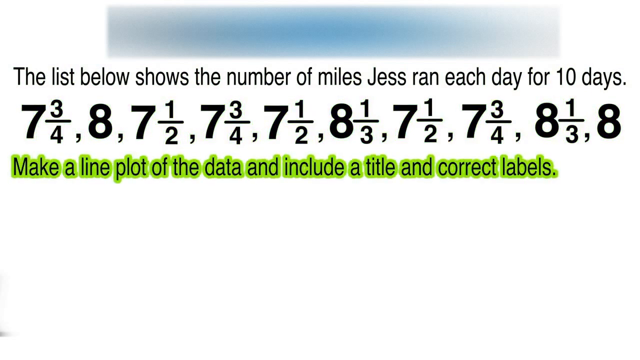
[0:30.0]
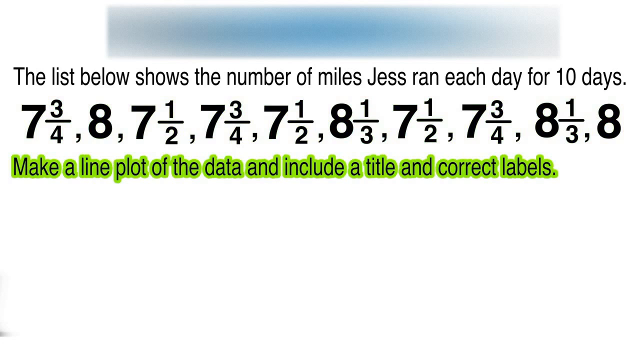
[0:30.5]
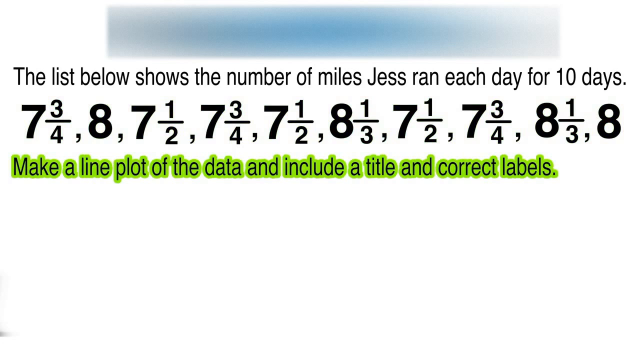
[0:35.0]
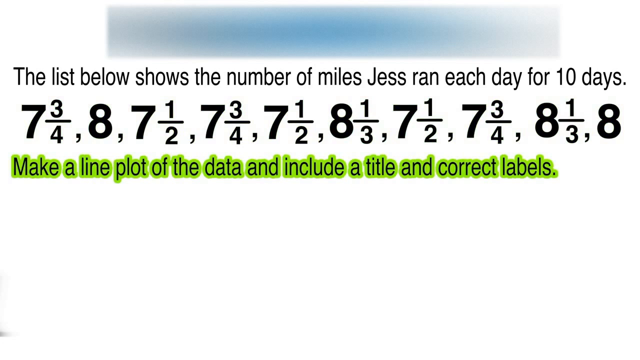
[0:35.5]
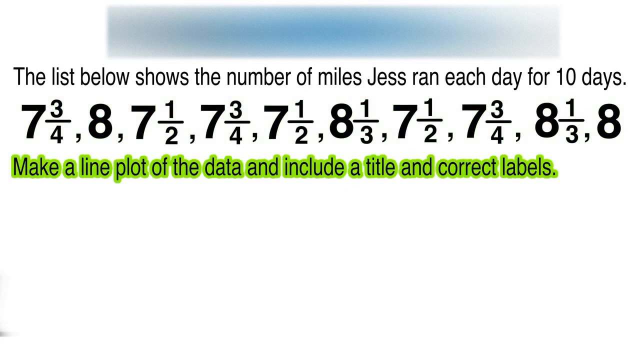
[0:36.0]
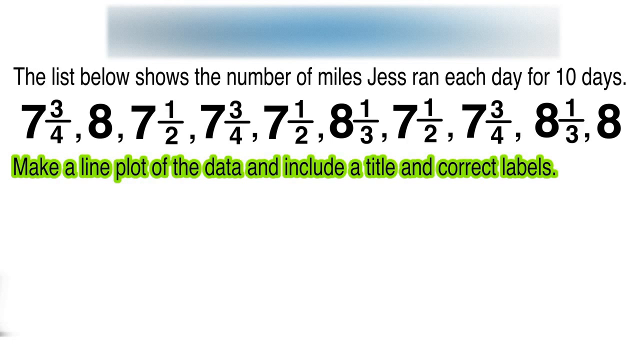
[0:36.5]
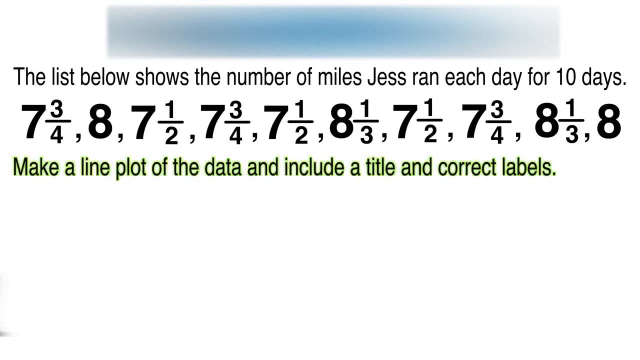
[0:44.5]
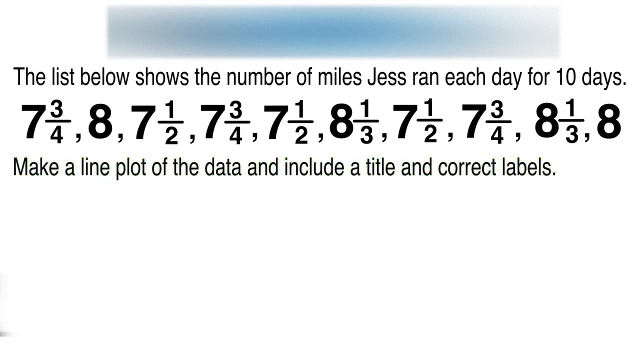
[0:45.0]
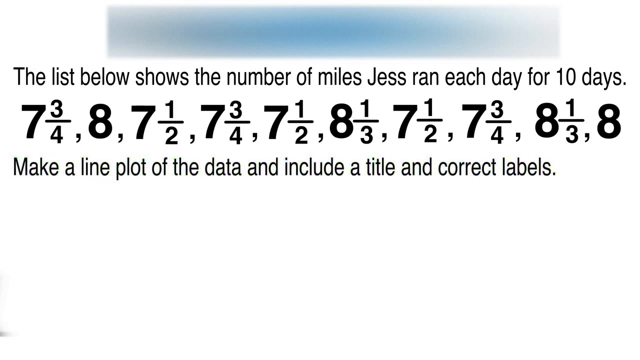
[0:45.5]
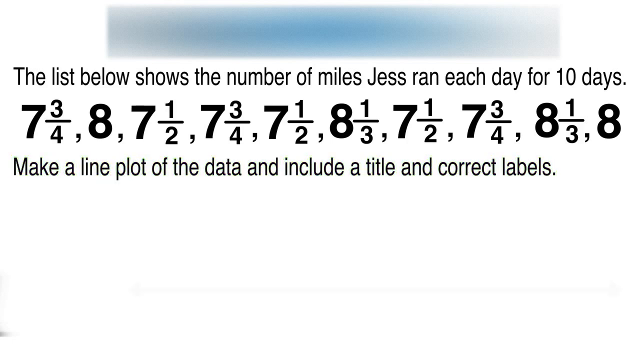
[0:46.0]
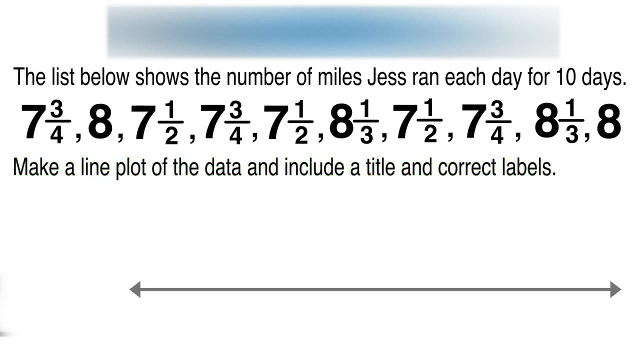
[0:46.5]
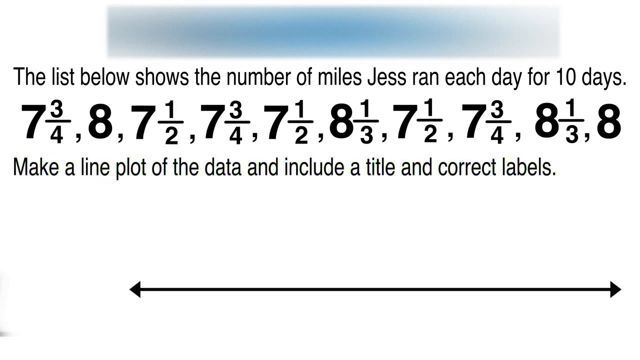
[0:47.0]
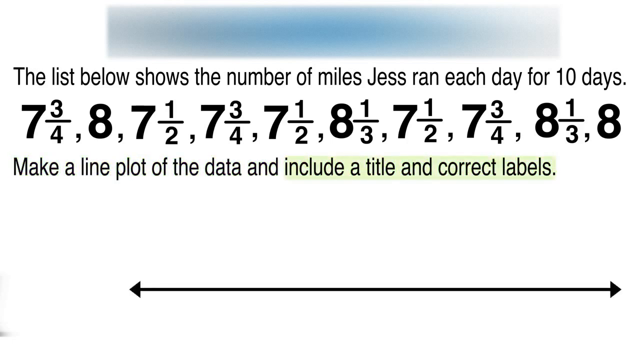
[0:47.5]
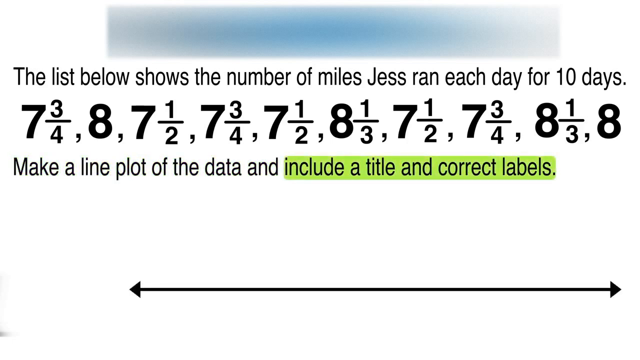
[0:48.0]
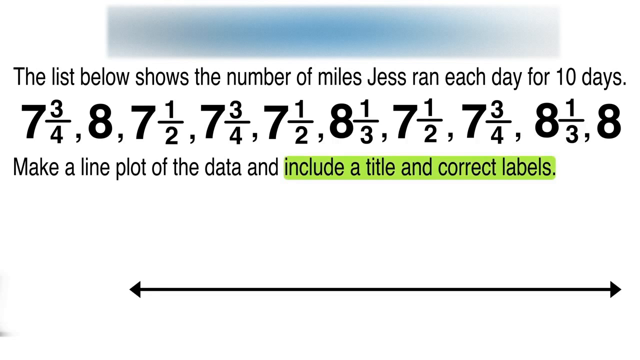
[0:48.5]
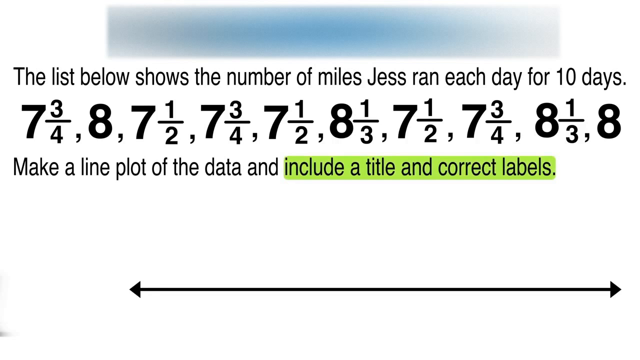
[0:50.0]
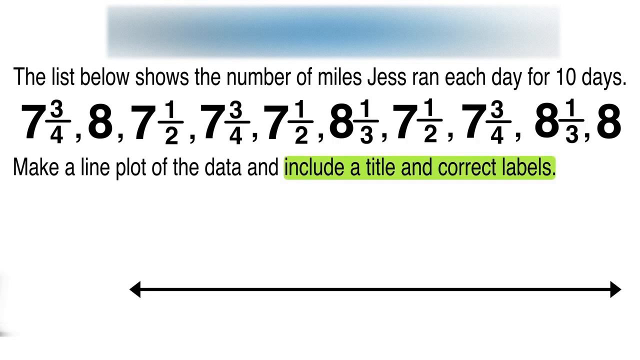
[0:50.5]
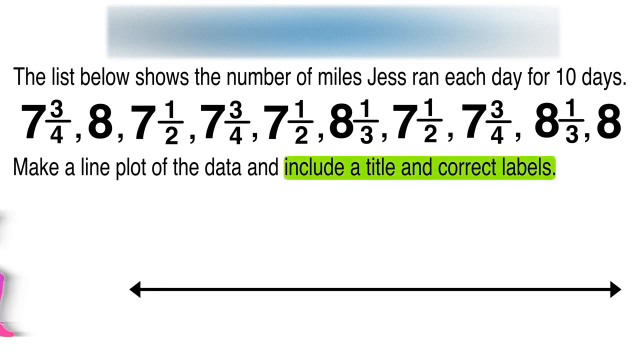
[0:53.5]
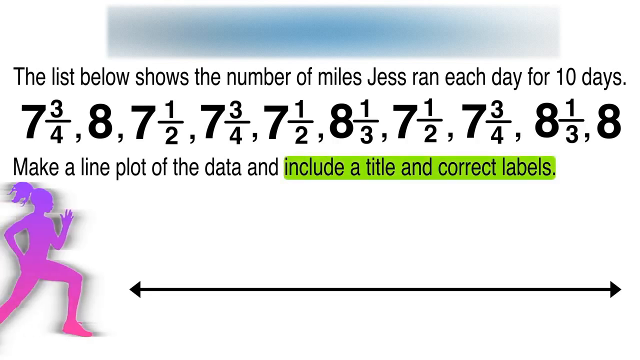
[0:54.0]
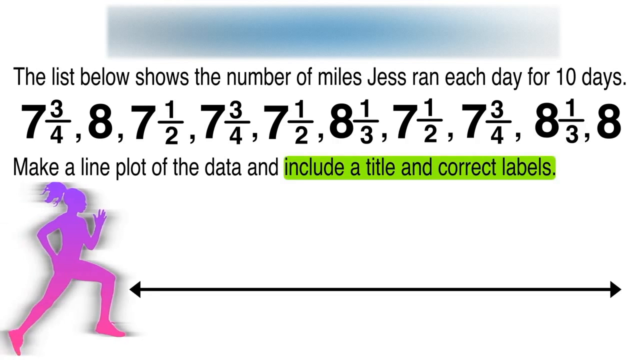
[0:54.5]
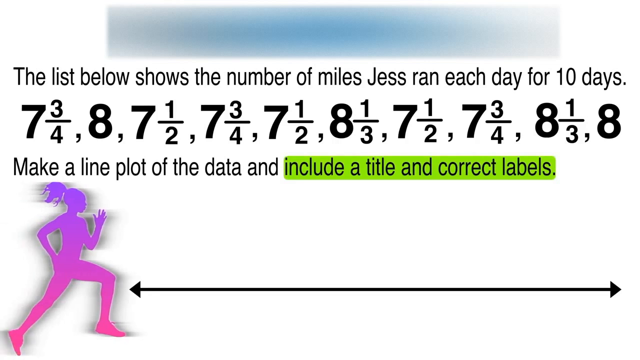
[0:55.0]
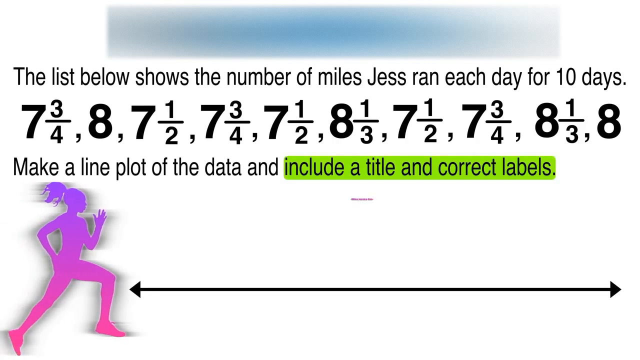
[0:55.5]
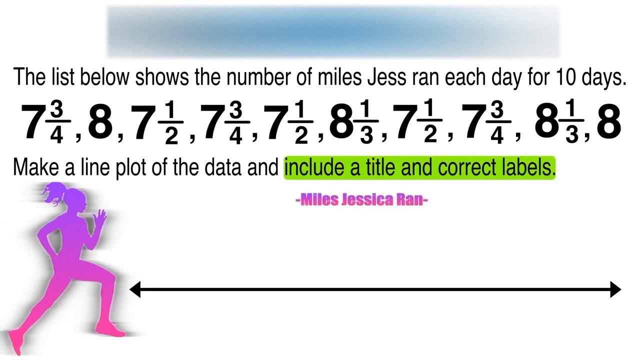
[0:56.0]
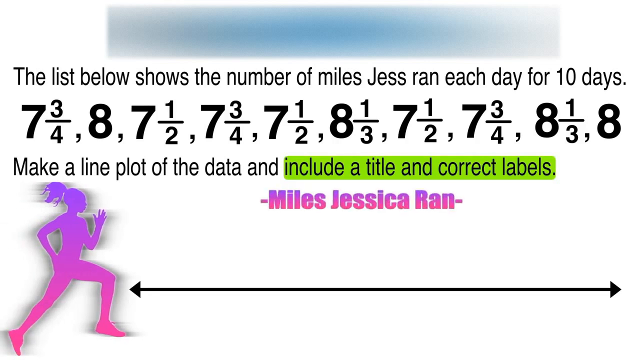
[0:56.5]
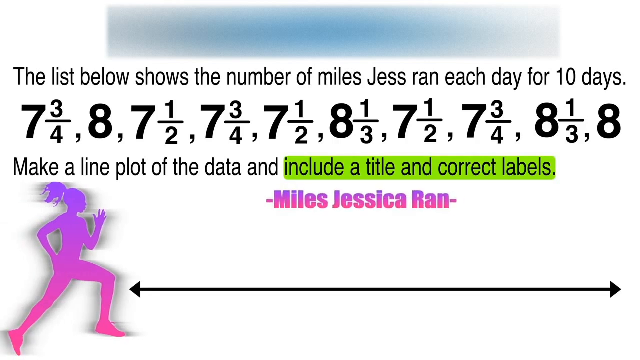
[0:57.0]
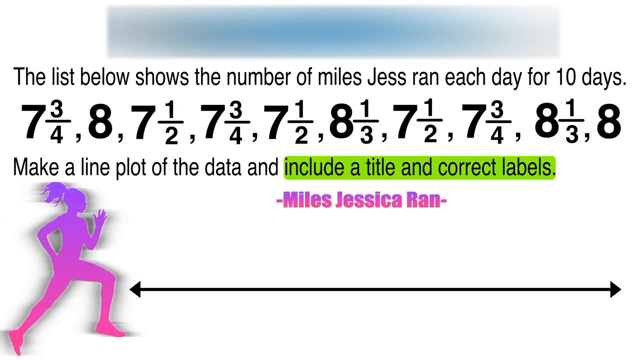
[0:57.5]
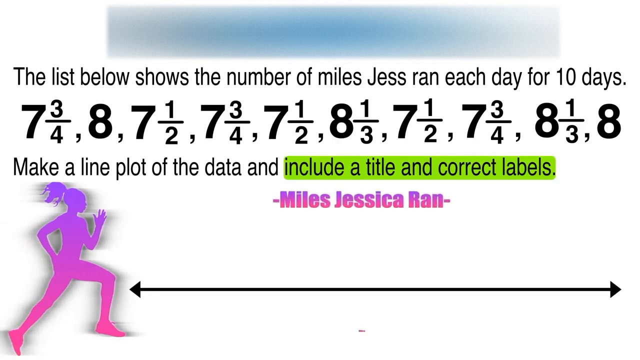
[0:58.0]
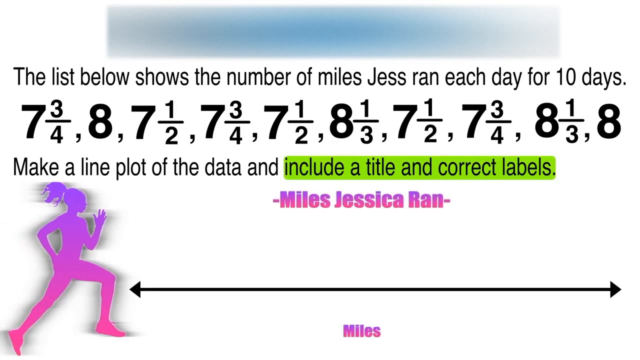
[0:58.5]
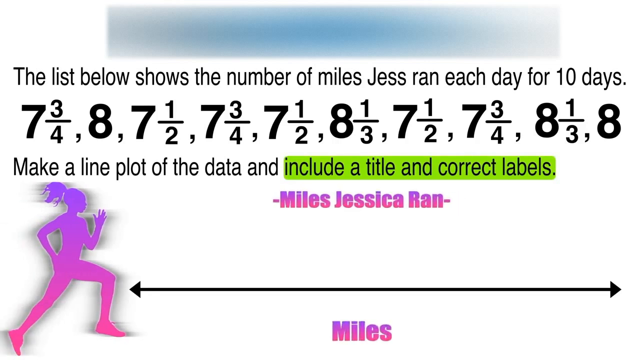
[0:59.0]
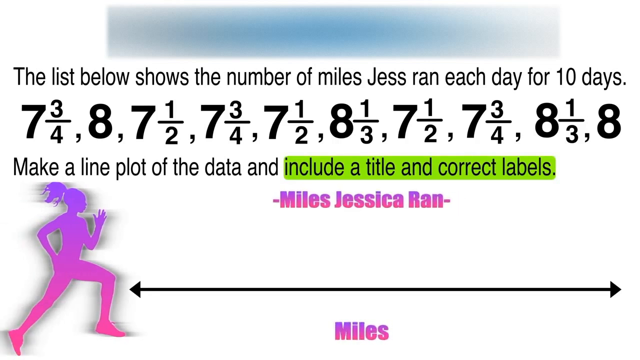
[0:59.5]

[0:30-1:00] The third line glows green, reading "make a line plot of the data and include the title and correct labels," and stays on screen like that for about 15 seconds. A black number line then appears below the question. After it appears, the part of the question reading "include a title and correct labels" is highlighted in green again. Next, a silhouette of a female runner with a ponytail, filled in with a purple-to-pink color, appears on the bottom left of the screen. The text "Miles Jessica Ran" appears just above the number line in a purple-pink color, and it expands and contracts.